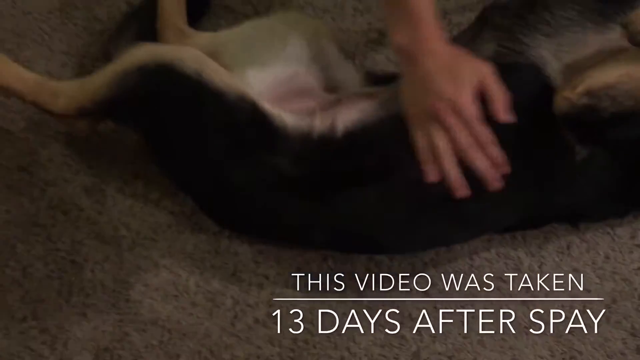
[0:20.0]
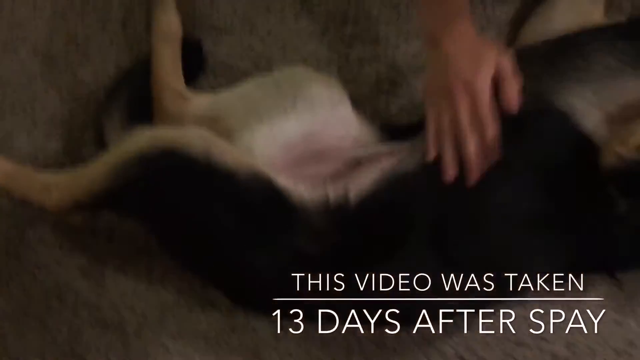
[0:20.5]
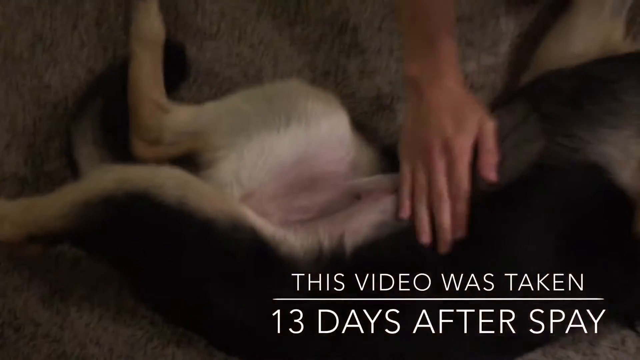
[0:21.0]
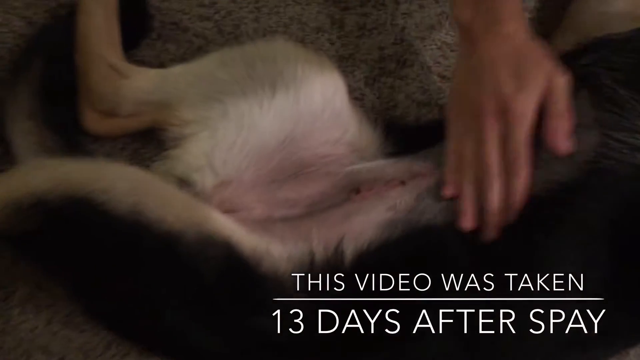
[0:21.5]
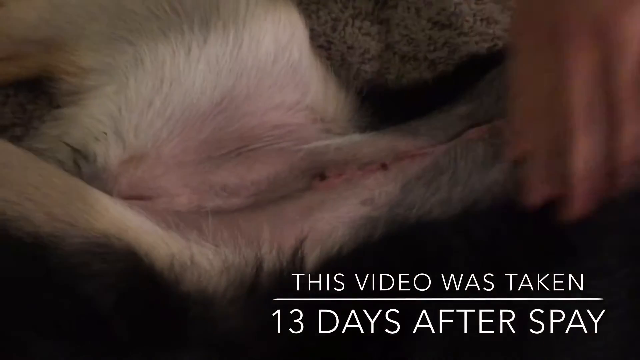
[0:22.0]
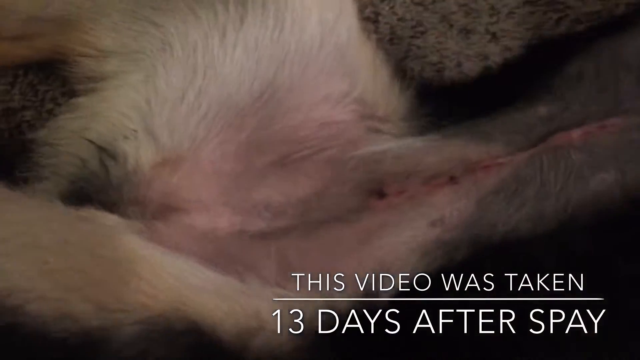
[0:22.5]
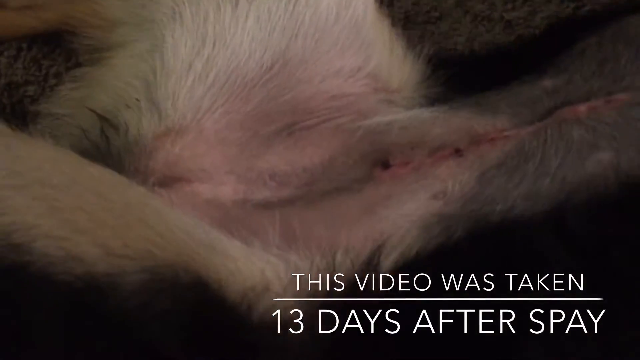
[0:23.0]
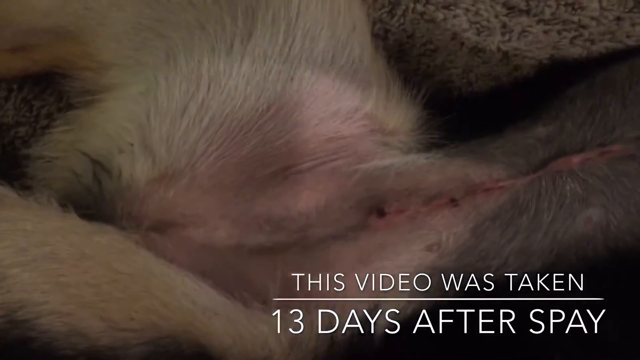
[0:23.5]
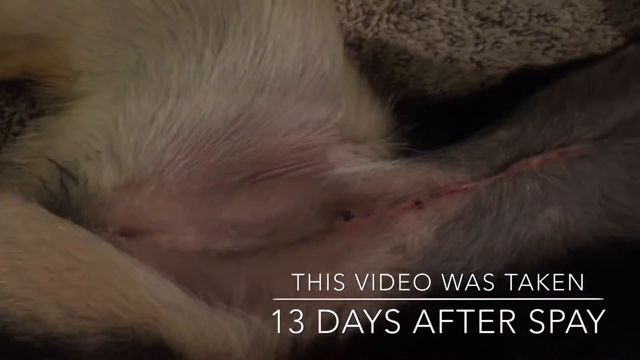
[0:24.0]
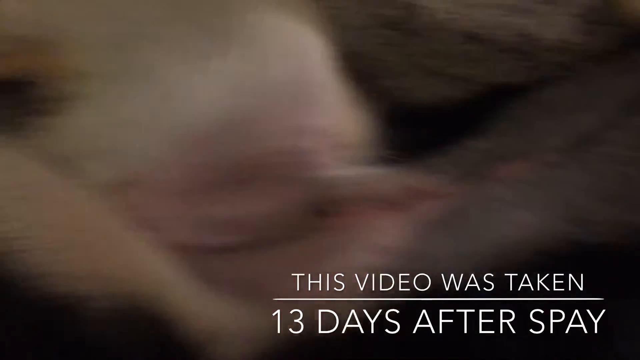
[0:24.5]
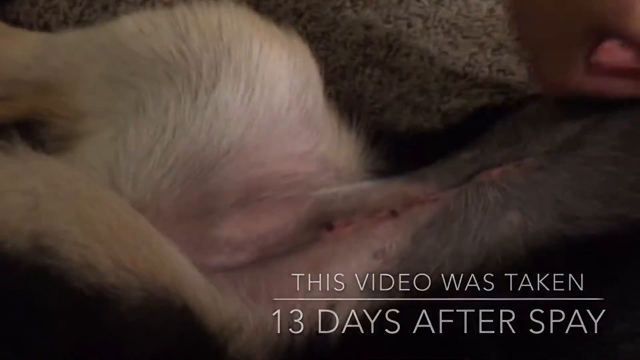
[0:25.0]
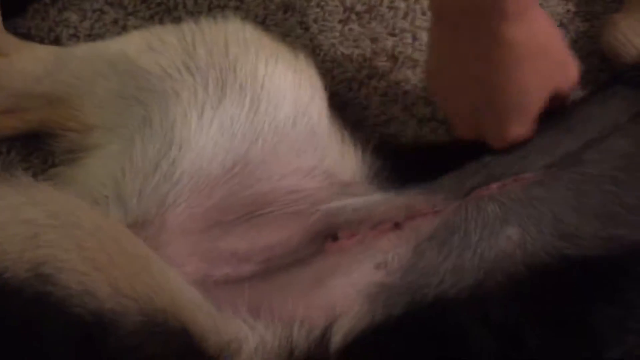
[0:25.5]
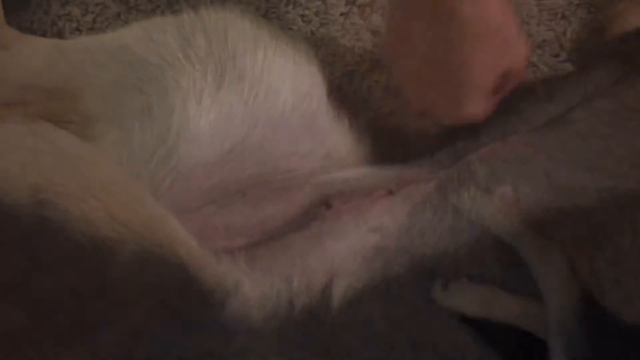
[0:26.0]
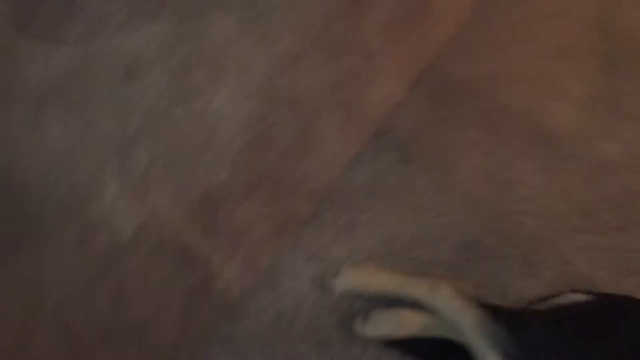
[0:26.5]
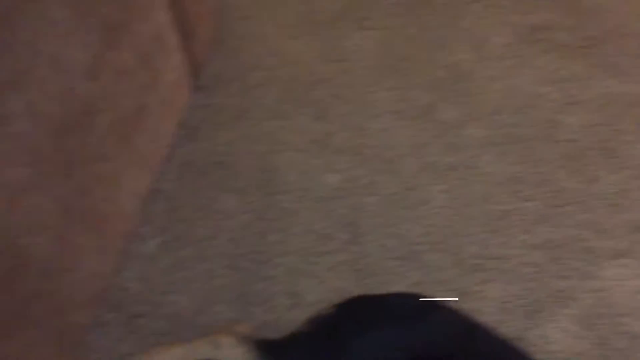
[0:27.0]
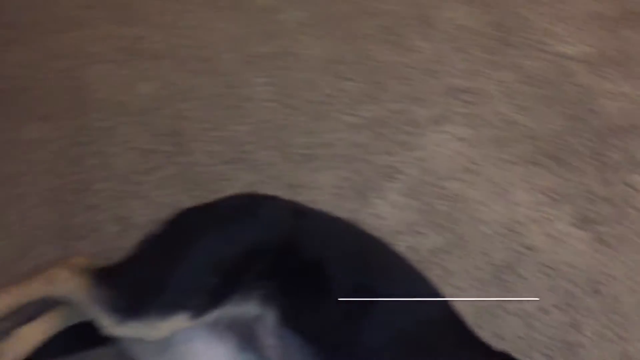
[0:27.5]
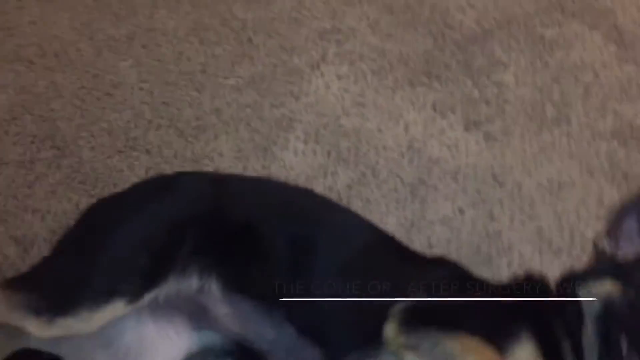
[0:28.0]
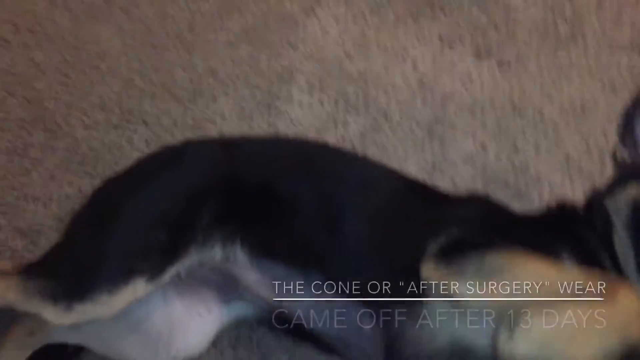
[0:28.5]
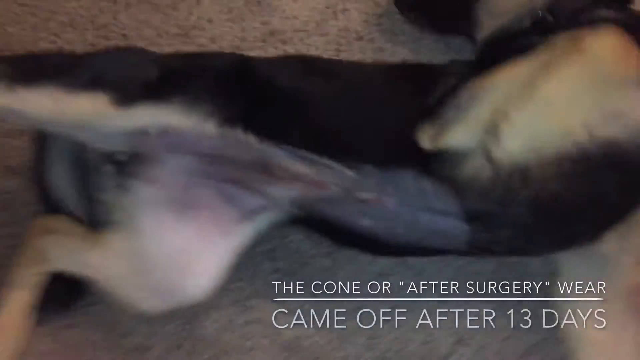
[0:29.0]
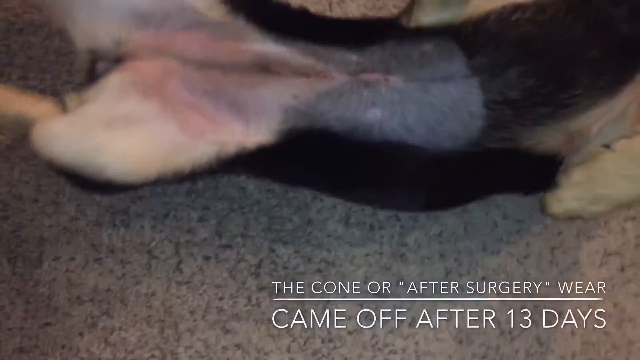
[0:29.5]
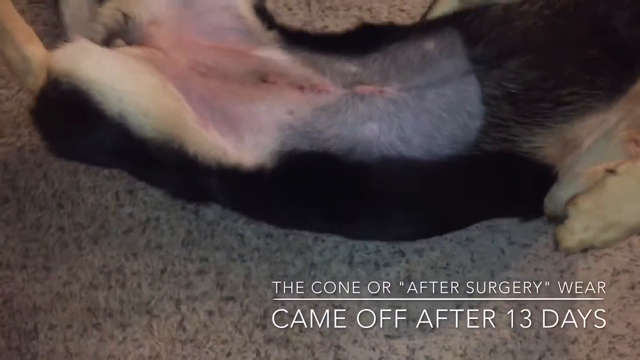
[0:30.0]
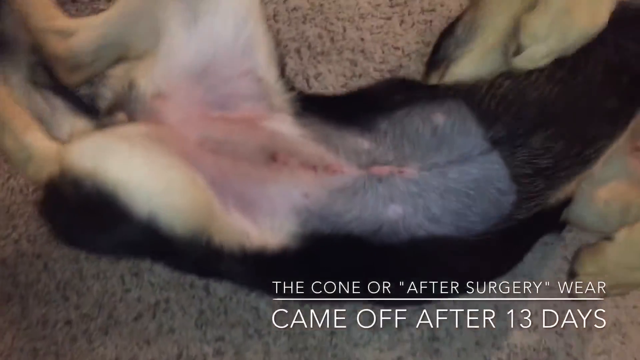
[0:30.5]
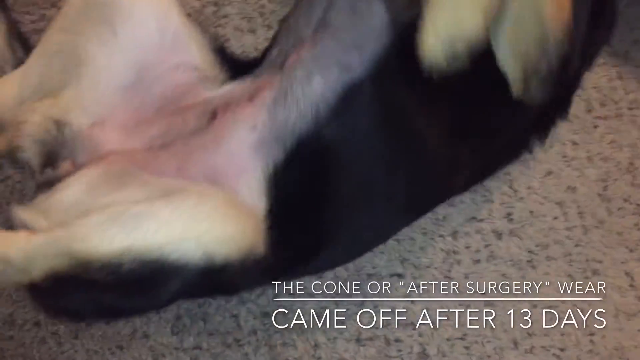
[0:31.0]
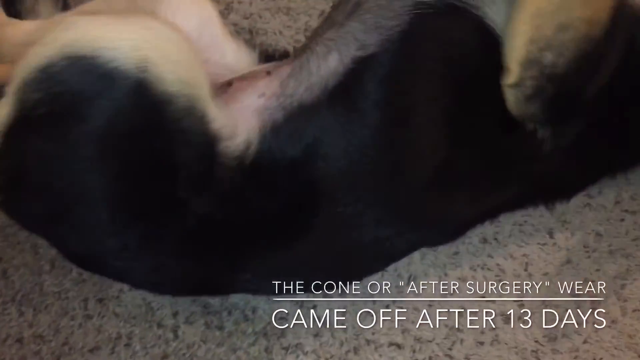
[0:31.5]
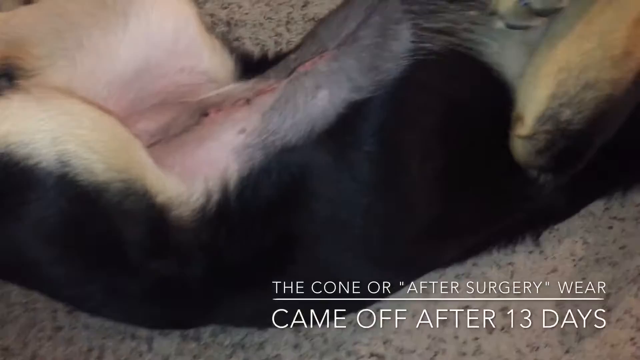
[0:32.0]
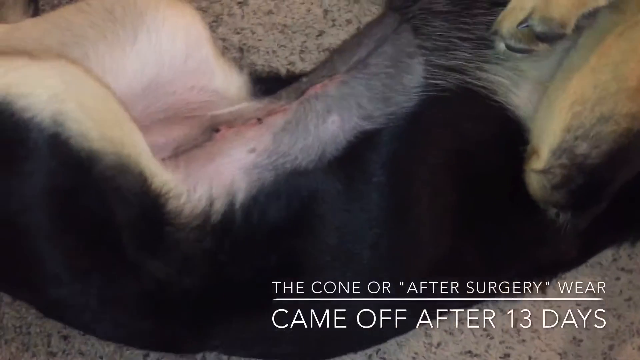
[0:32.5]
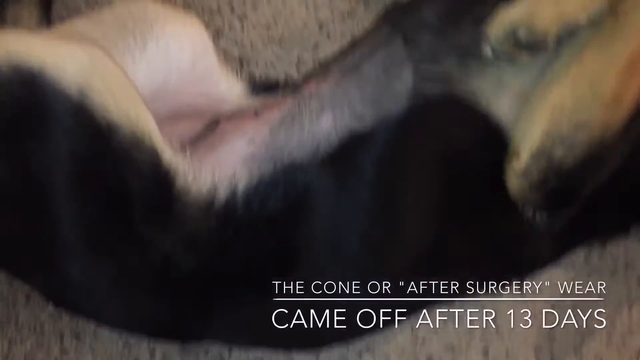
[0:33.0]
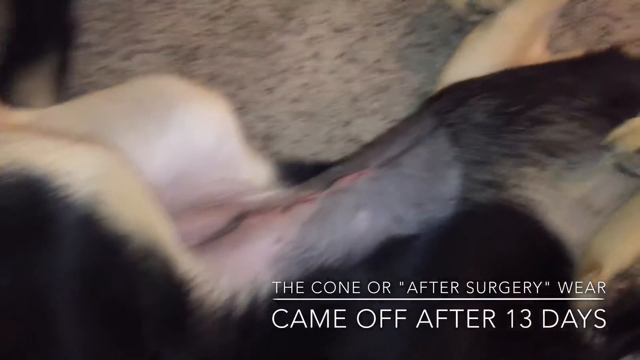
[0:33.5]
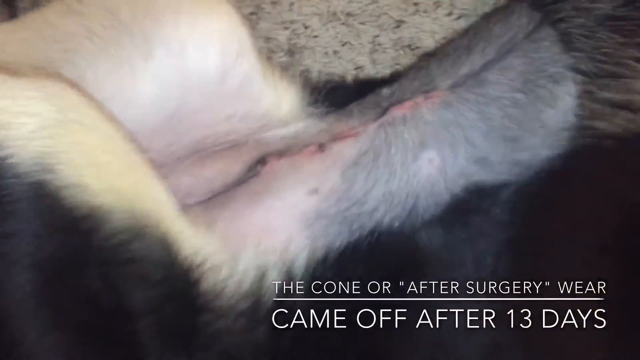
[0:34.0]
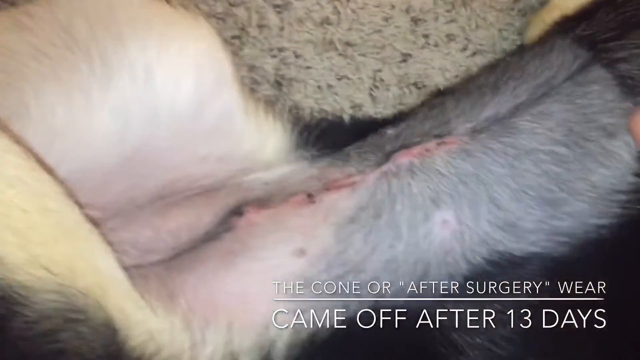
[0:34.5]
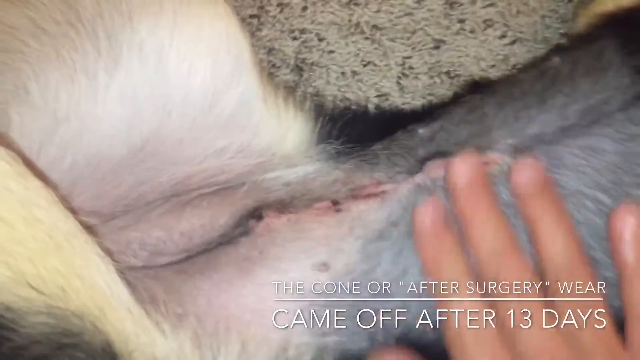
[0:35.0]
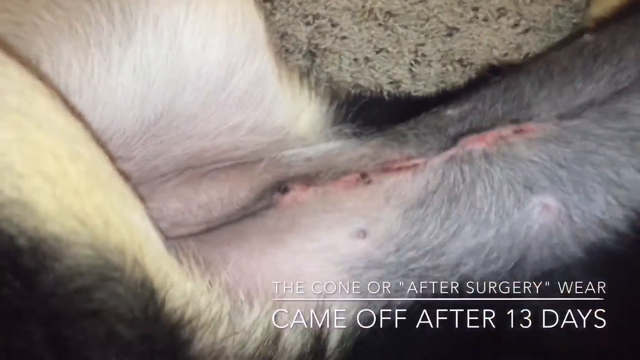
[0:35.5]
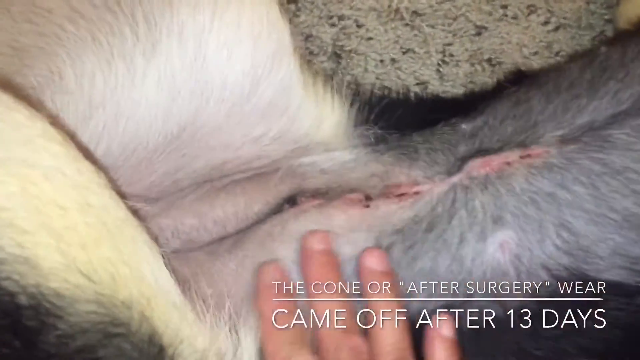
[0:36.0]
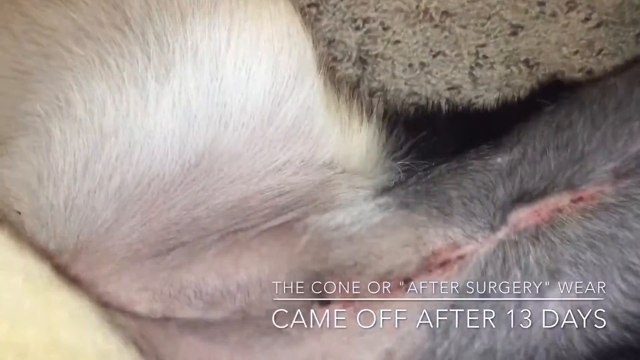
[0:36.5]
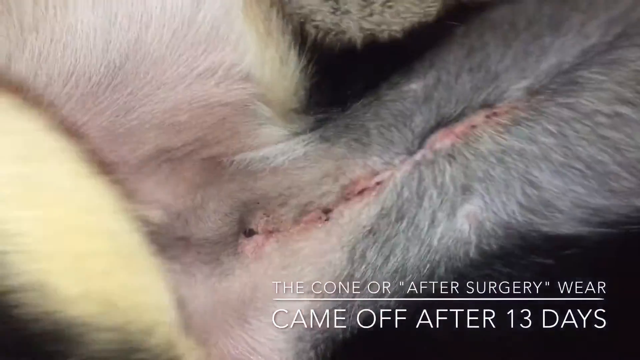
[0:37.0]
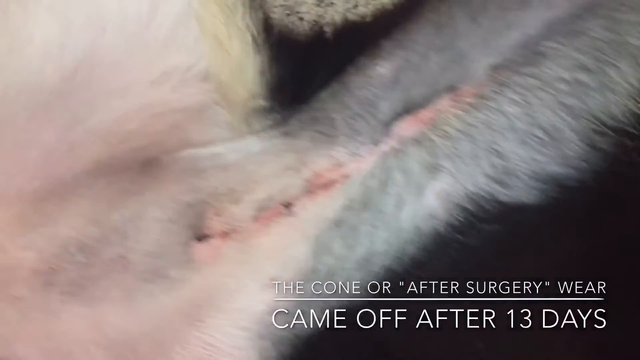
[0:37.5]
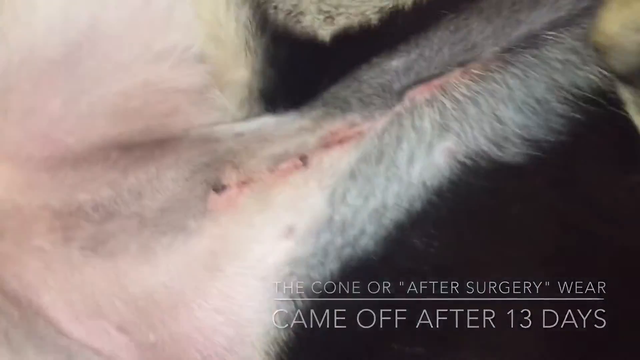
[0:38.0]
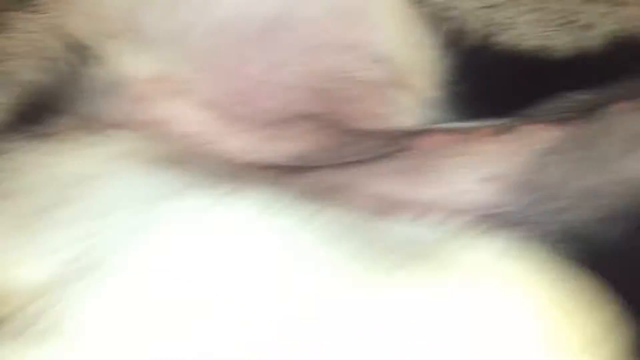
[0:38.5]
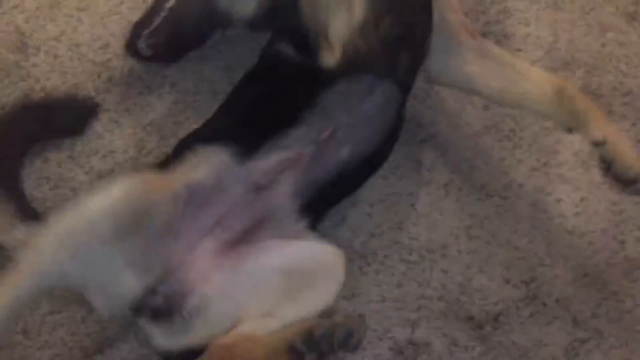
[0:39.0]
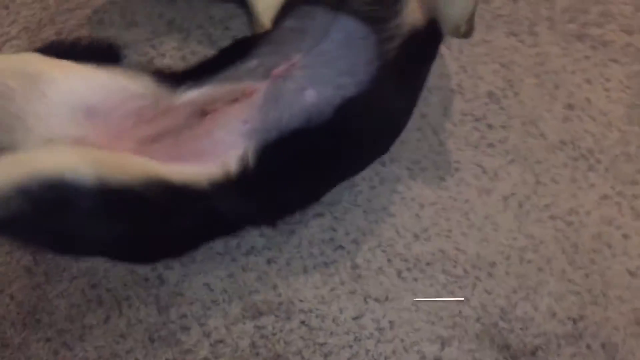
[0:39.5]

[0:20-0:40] The dog is shown on its left-hand side, with a view by its stomach and the white parts of the dog's skin. There is a close-up of an area, and then a shot of the dog moving around, showing black skin and what looks like an area where an incision was made, with stitches visible. The camera tries to focus on the shot. A white subtitle pops up at the bottom right of the screen: "this video was taken 13 days after SPAY".